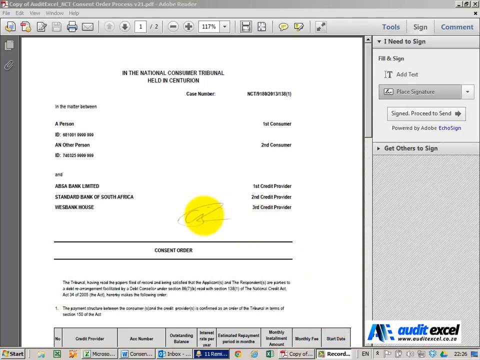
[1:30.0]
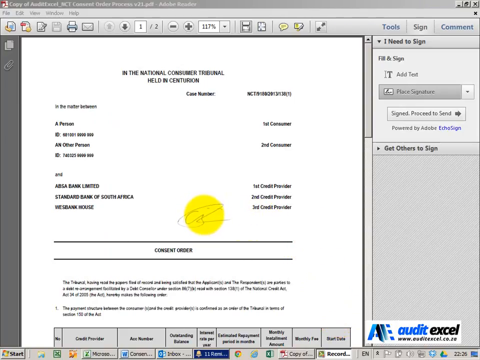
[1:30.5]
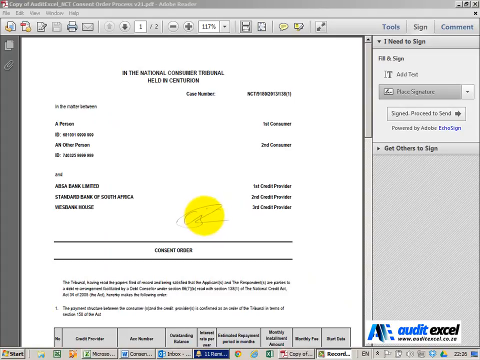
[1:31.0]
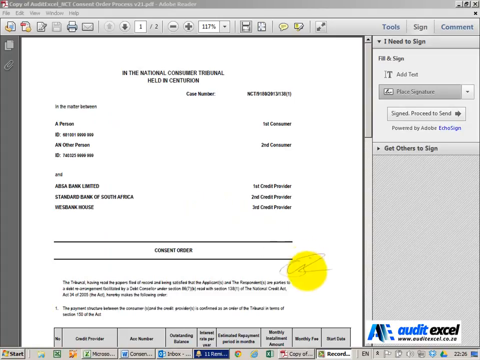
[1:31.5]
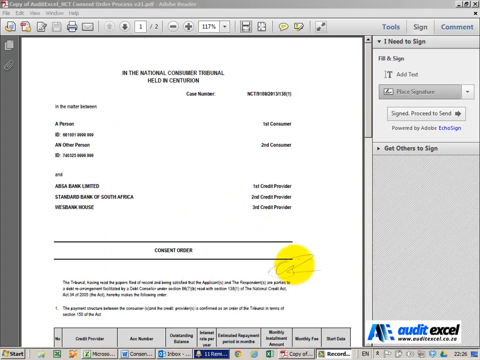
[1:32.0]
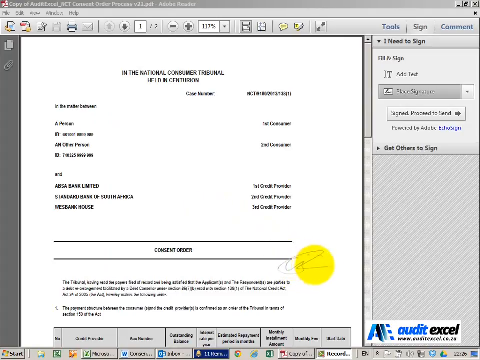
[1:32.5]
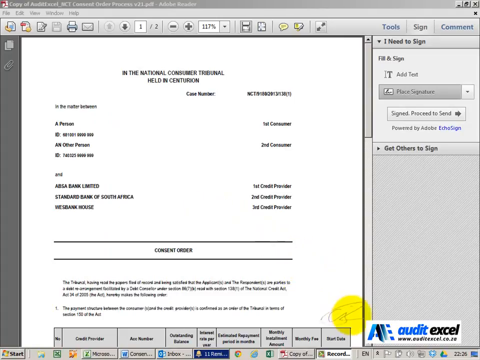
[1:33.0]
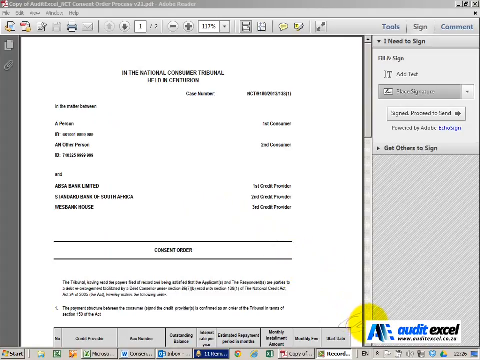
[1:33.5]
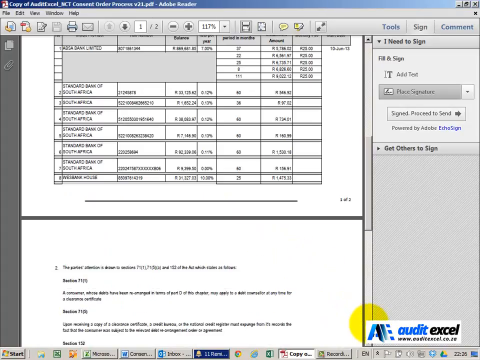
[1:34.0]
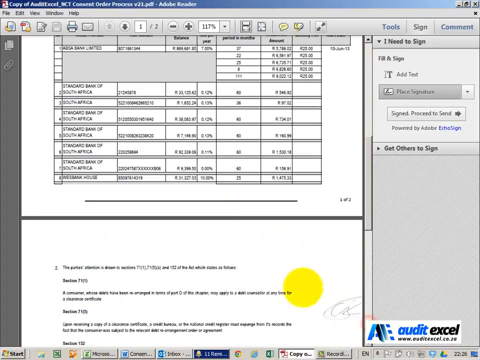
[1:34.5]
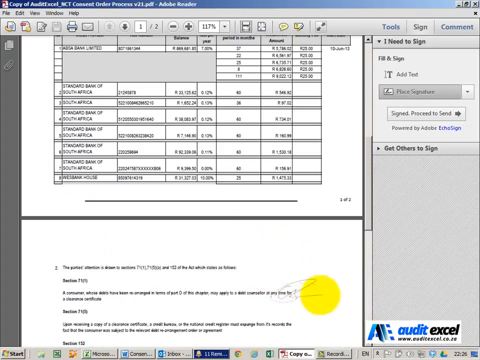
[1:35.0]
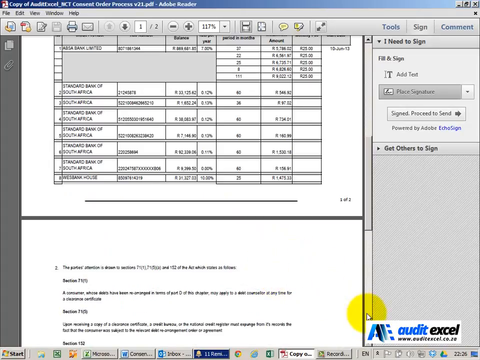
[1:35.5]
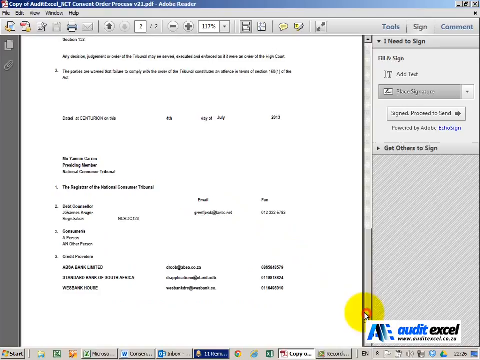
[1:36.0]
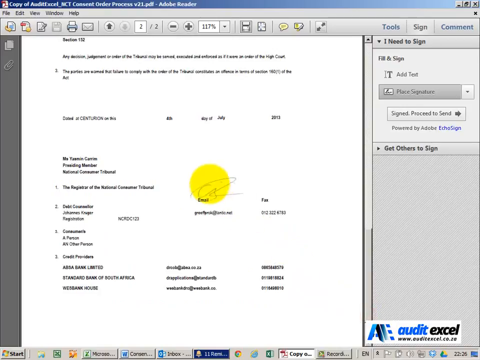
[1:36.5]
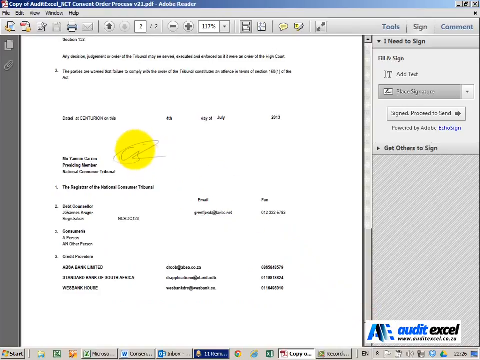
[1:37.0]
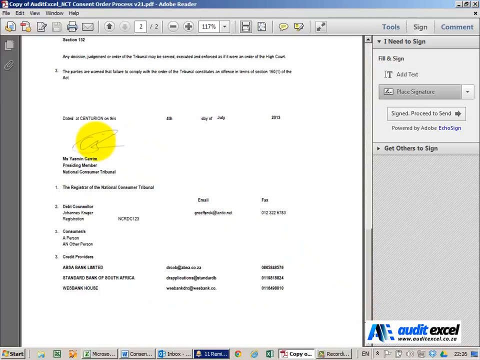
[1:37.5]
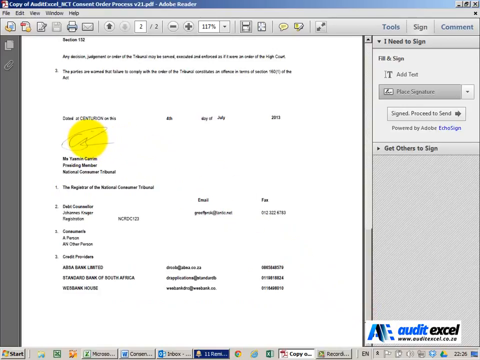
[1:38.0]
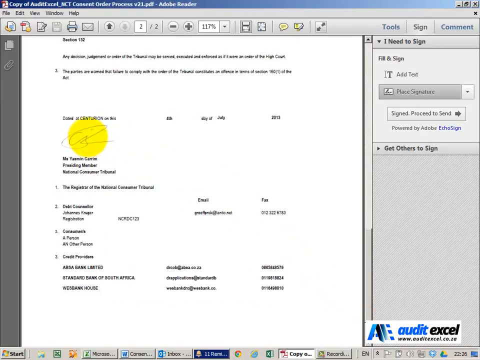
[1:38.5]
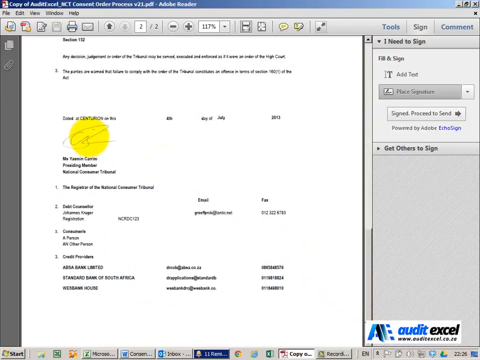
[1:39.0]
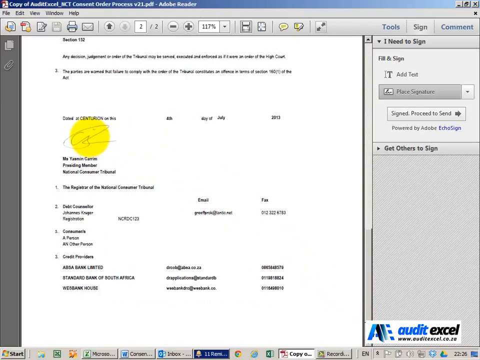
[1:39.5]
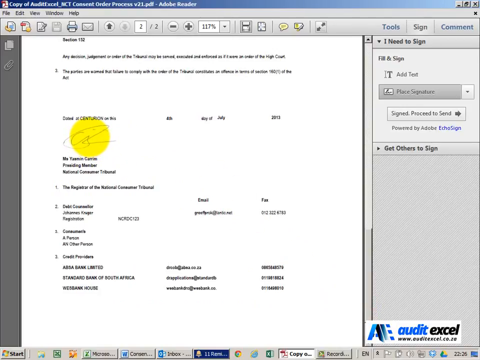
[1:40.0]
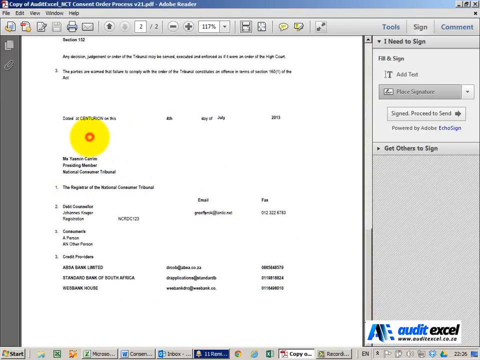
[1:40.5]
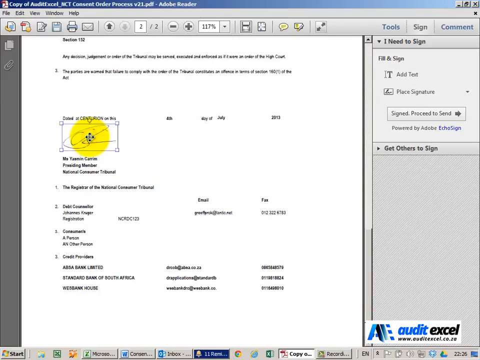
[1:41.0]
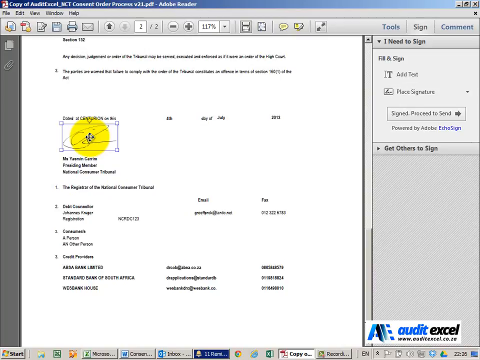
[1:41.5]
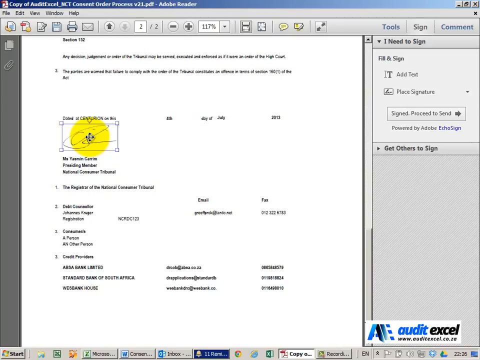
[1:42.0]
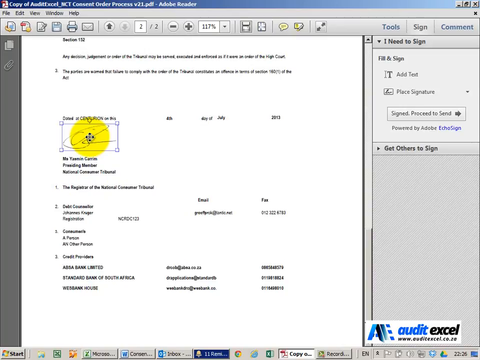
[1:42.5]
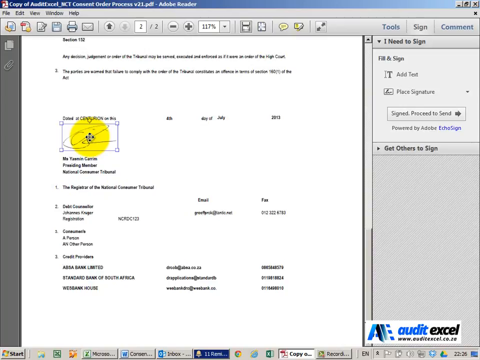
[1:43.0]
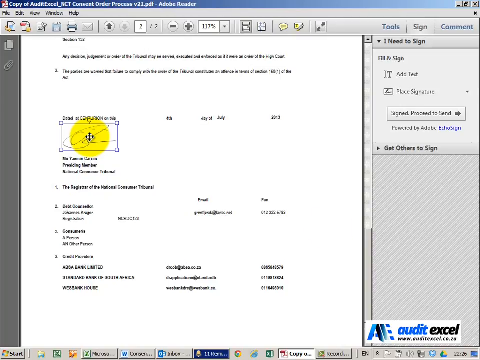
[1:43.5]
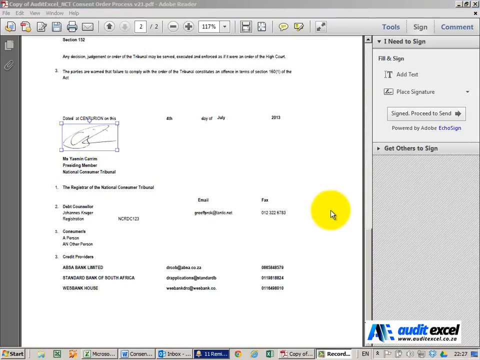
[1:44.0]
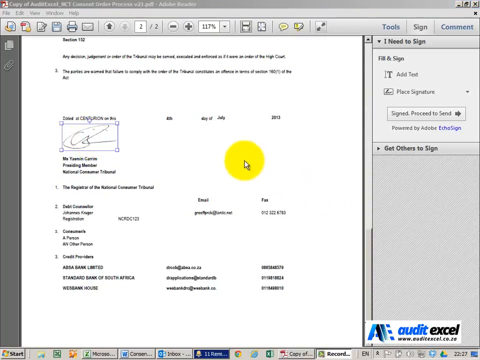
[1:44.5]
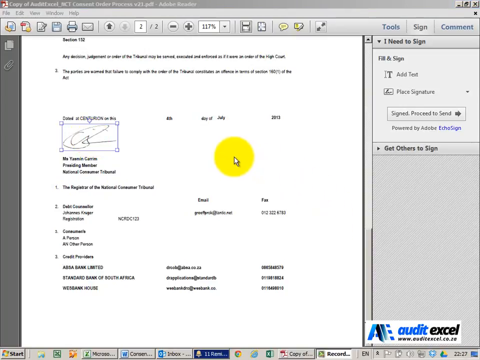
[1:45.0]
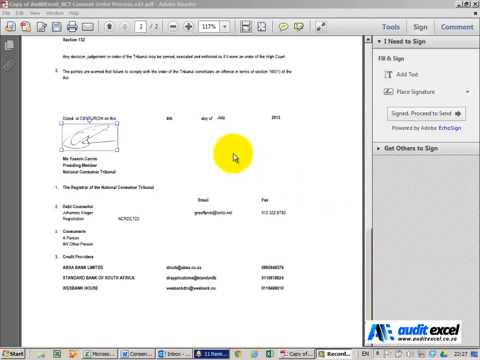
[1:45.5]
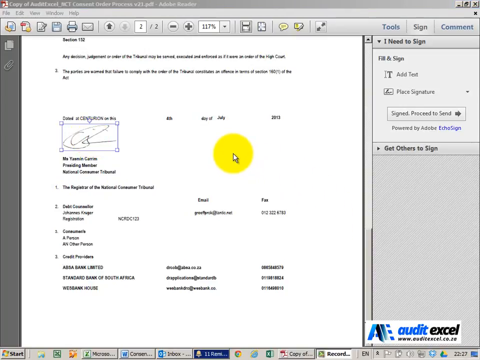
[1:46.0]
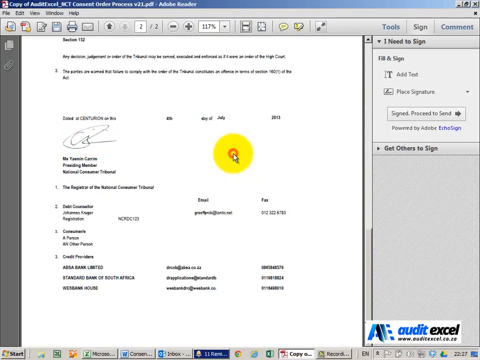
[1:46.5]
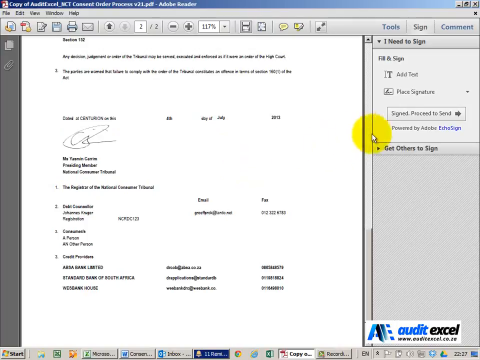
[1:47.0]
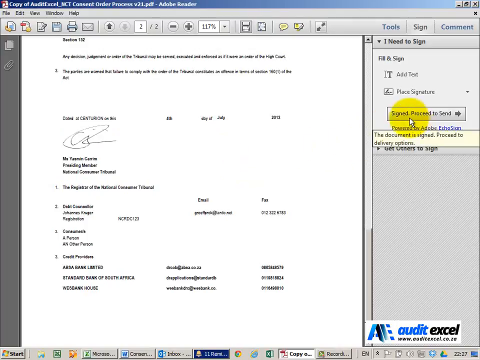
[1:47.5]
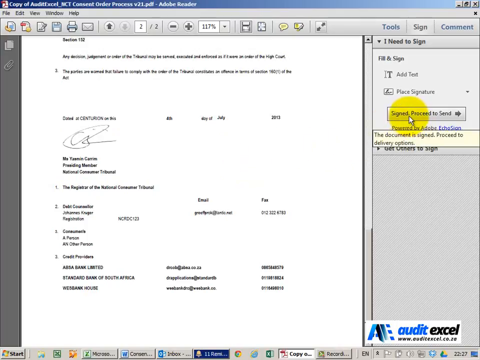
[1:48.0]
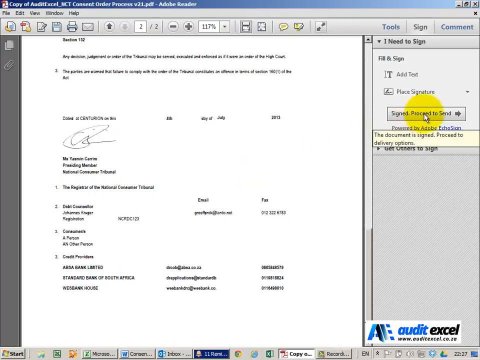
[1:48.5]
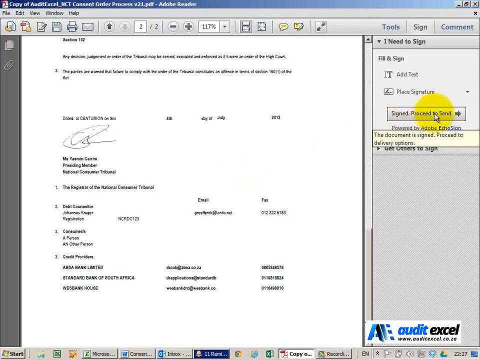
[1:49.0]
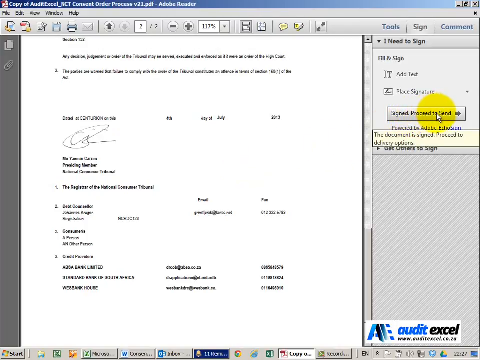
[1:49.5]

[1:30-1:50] The mouse, highlighted in a yellow circle, moves the page around, and the user seems to select a picture to add to the file, twice. The picture is too small to see and is blurred out from view elsewhere. The video appears to be a tutorial on adding pictures to a PDF file.